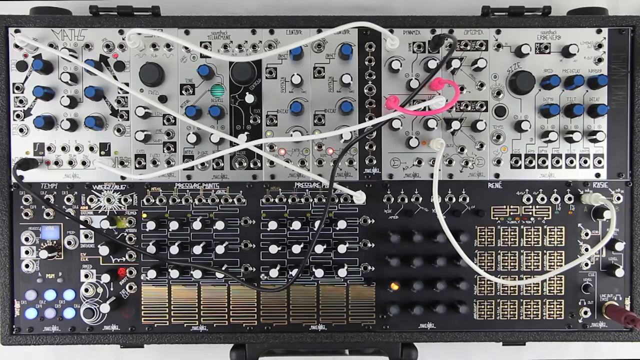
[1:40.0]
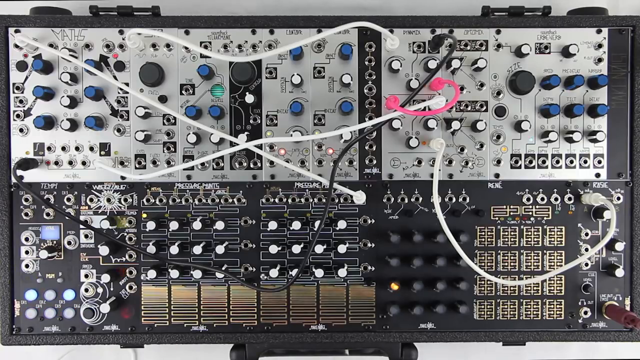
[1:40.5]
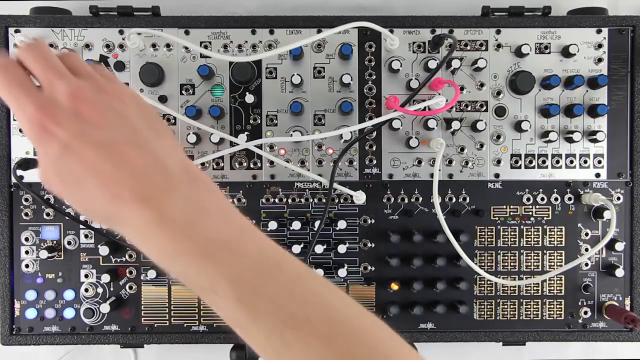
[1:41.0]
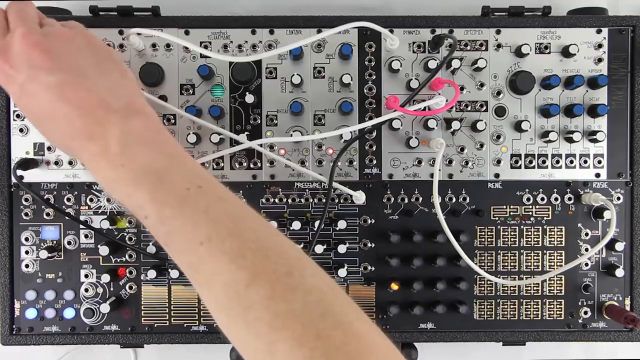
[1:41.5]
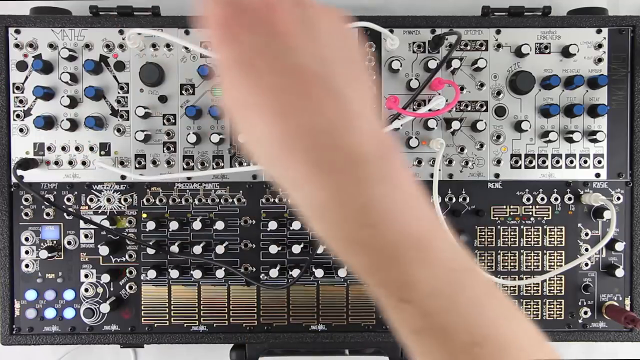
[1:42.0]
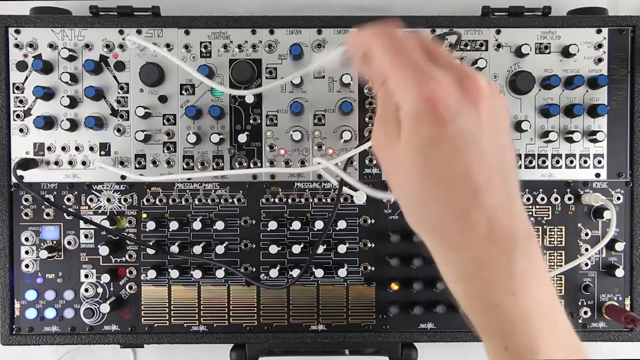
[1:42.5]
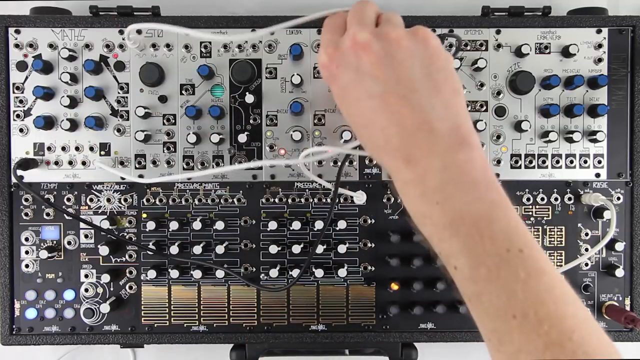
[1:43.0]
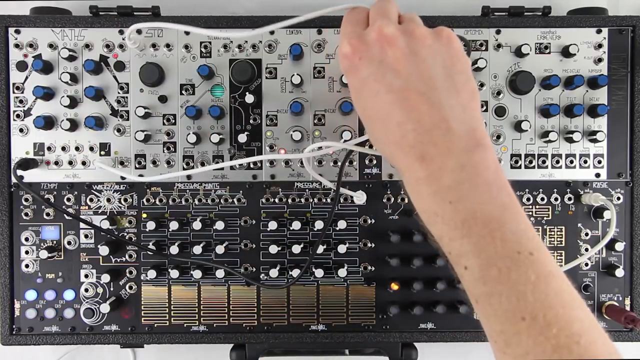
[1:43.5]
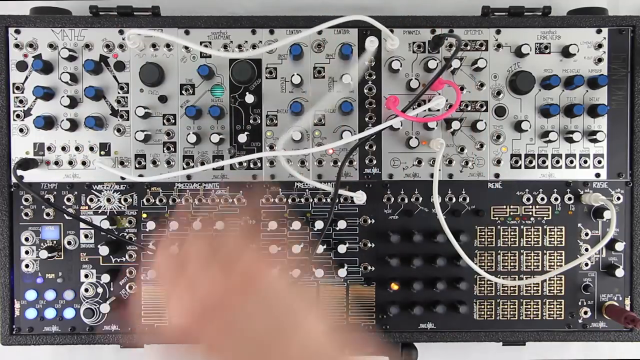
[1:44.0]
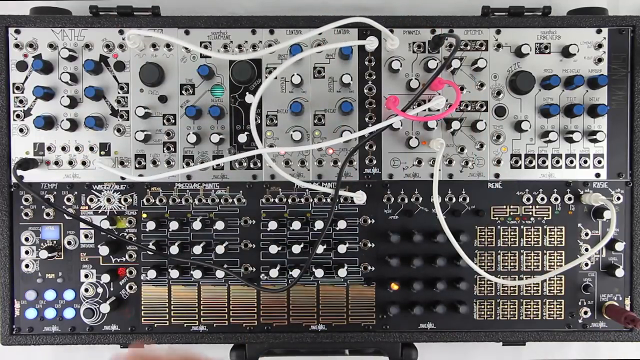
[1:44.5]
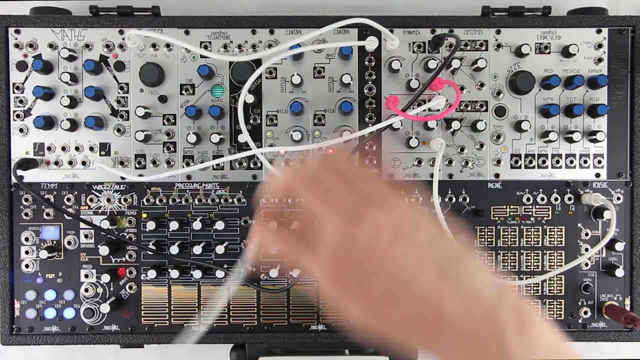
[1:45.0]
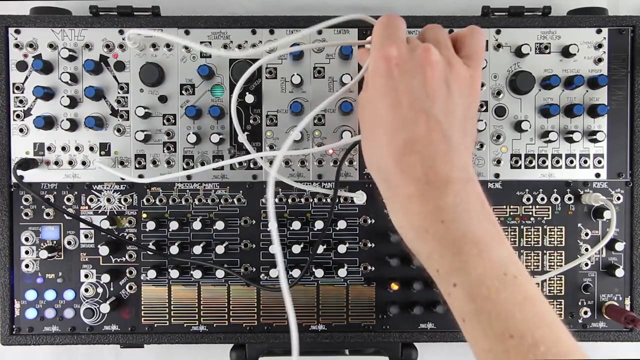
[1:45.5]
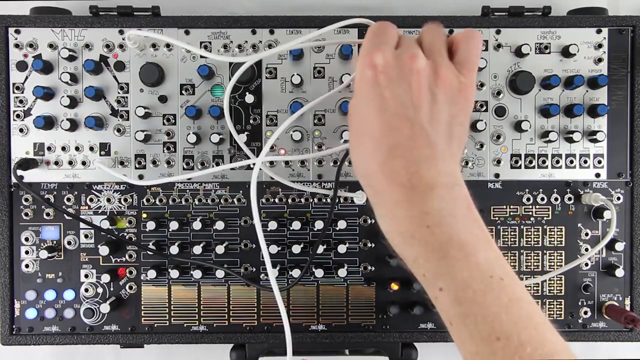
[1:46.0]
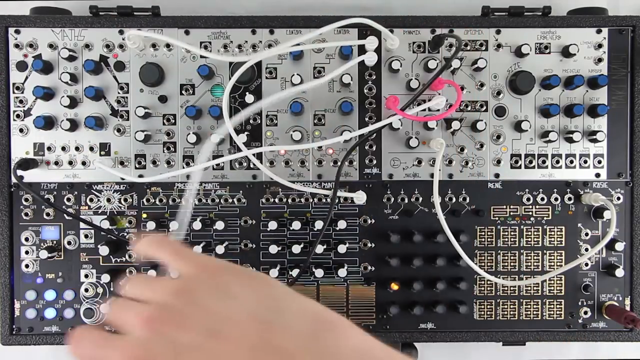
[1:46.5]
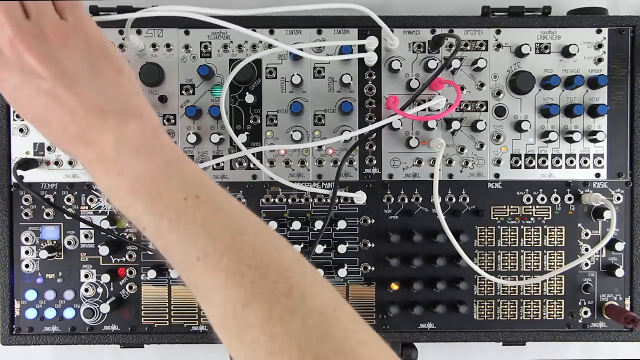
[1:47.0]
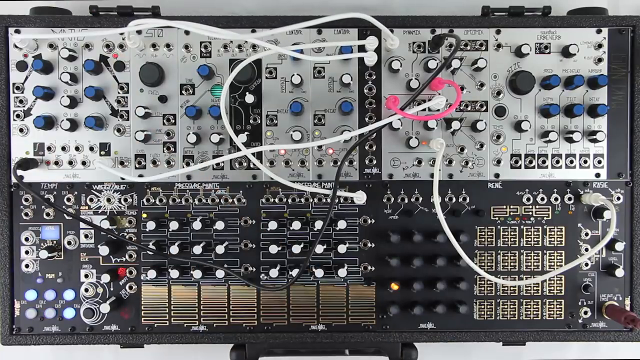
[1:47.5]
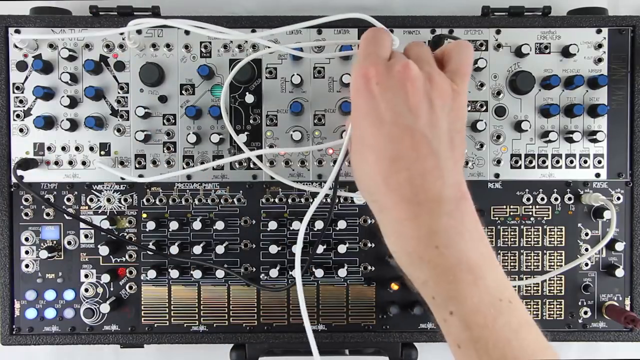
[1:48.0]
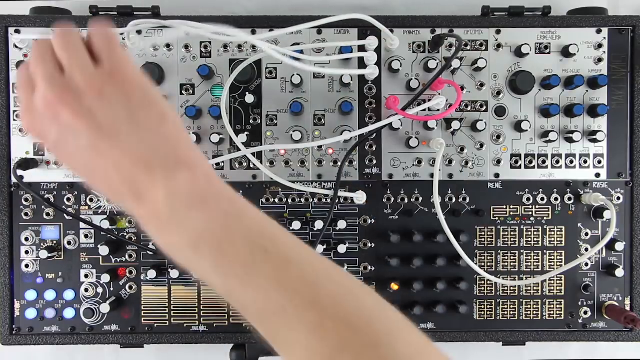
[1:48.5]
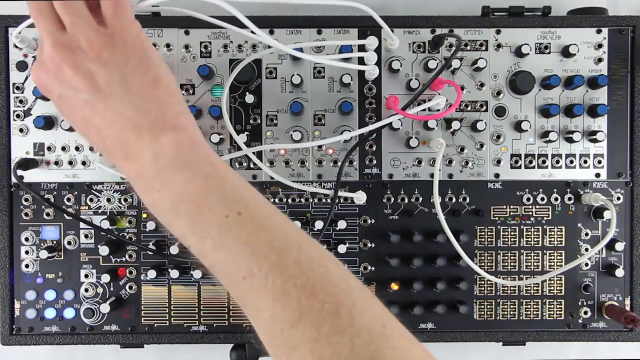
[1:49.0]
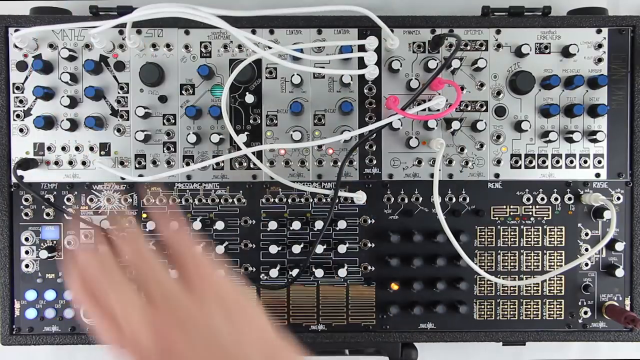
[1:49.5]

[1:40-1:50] A human hand shows the empty holes described in the diagram and connects wires into them by following the diagram, doing so three times with three white wires, matching the black lettering, black icons and arrows of the graphic. So far there are three white wires on the board, one long black wire connected to two holes, and one short pink or red wire connected to two nearby diagonal holes.